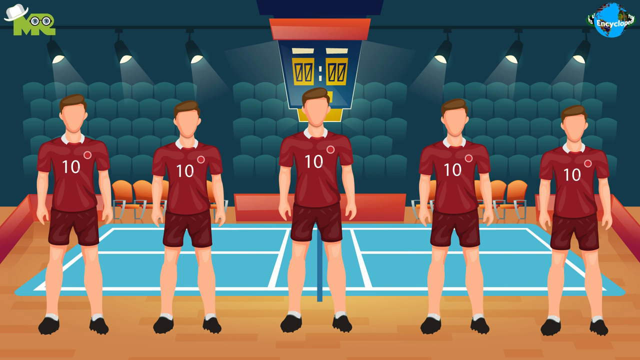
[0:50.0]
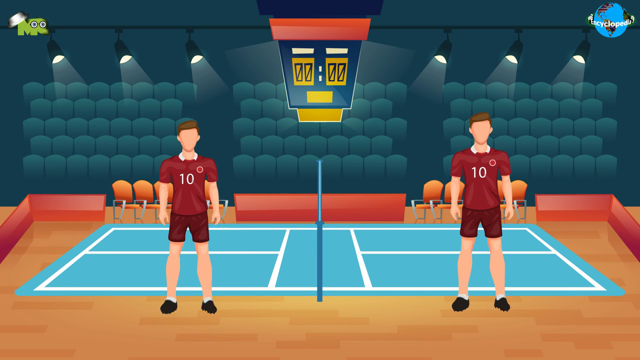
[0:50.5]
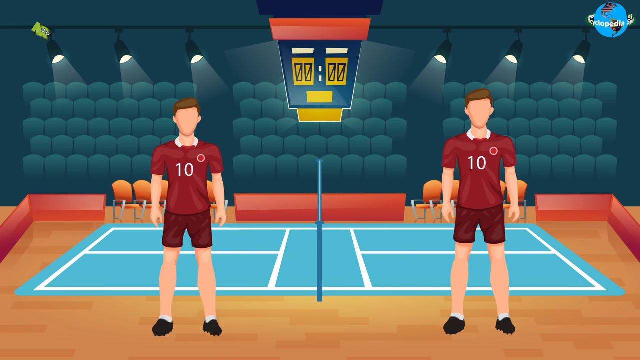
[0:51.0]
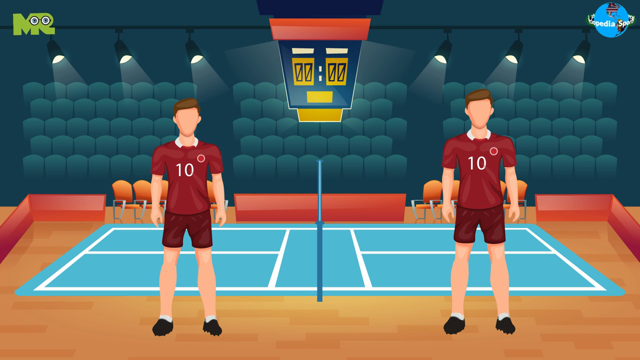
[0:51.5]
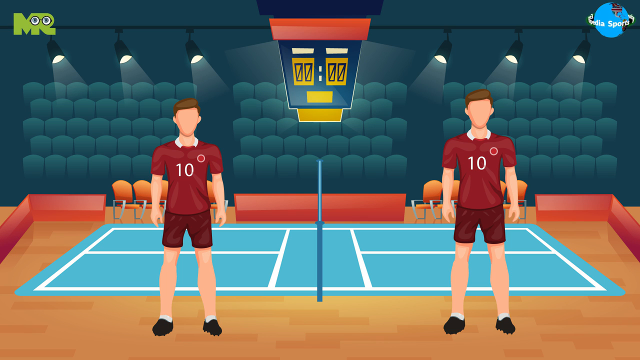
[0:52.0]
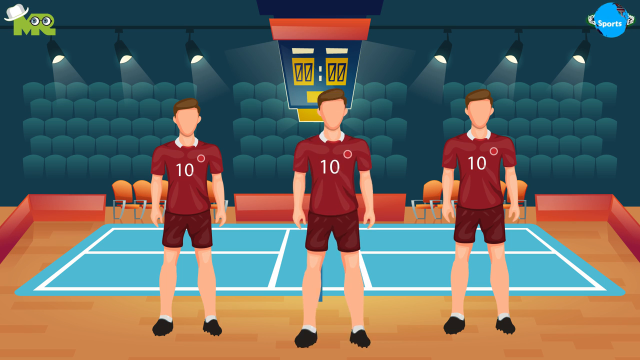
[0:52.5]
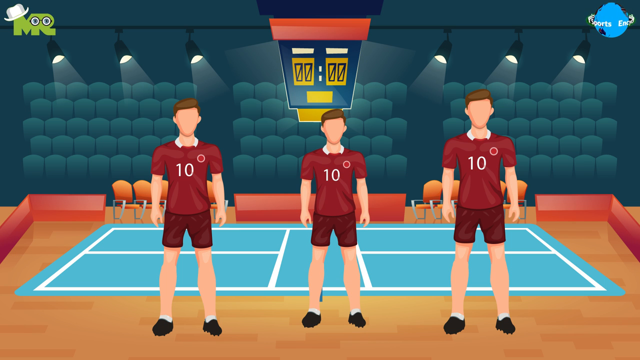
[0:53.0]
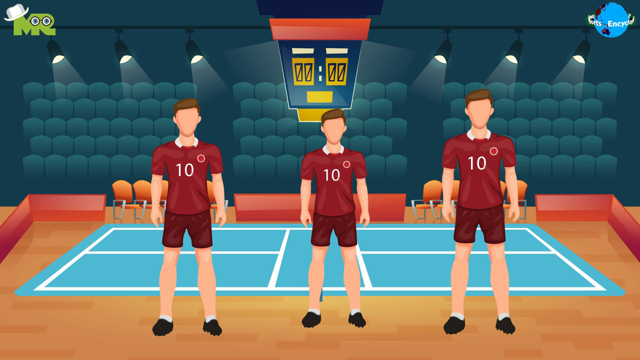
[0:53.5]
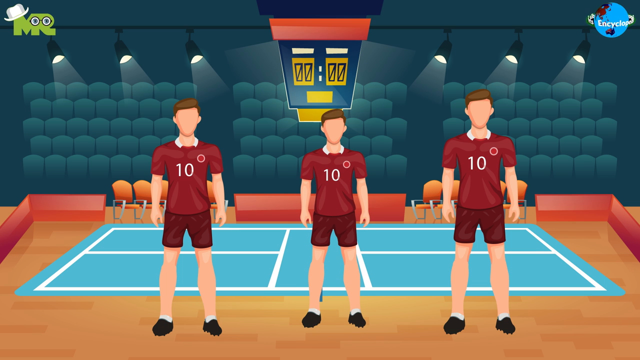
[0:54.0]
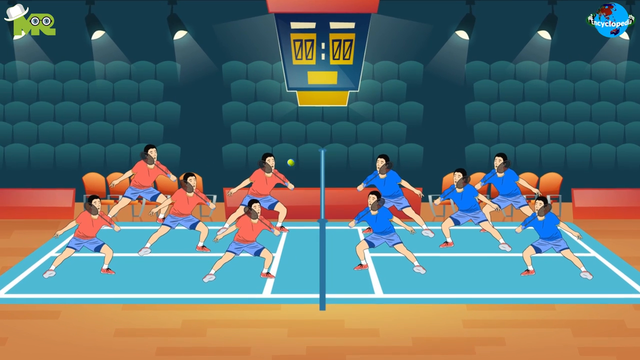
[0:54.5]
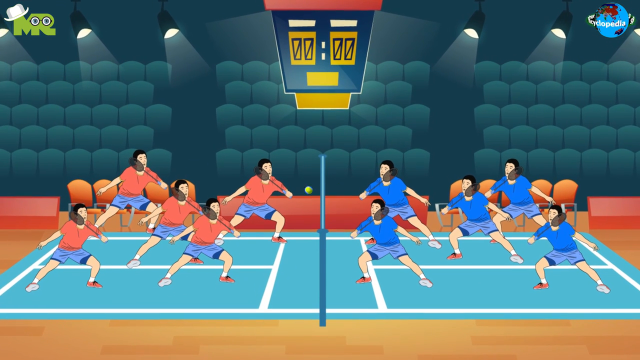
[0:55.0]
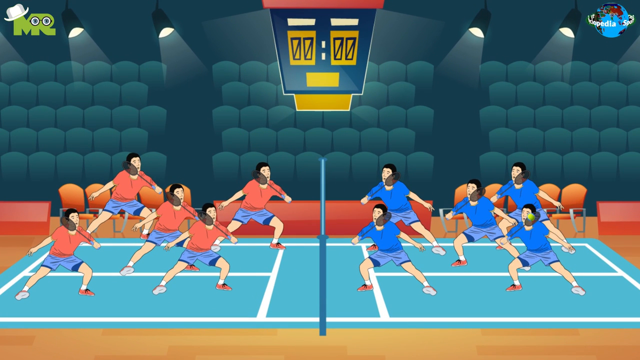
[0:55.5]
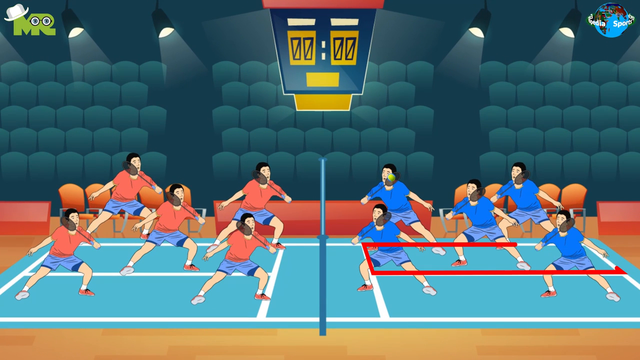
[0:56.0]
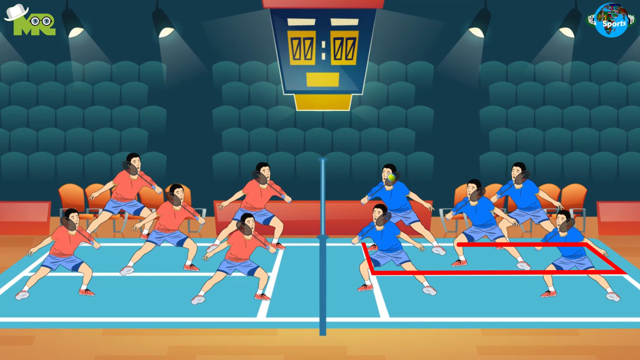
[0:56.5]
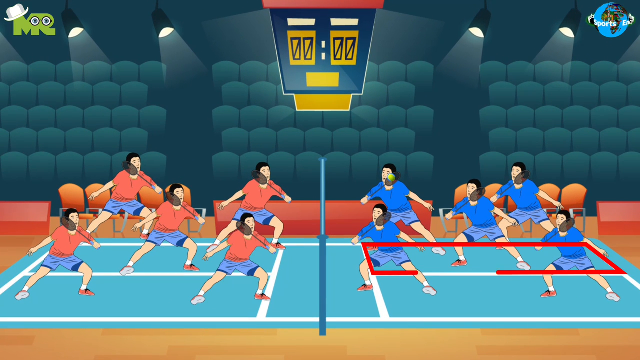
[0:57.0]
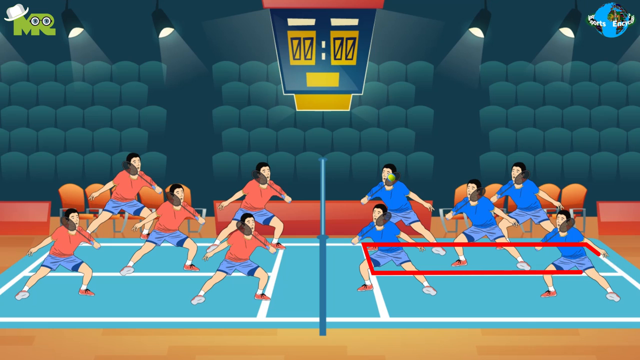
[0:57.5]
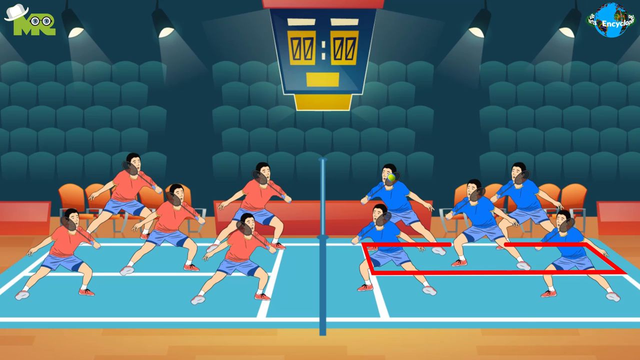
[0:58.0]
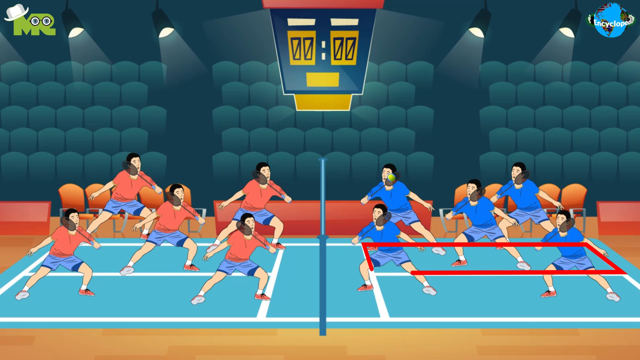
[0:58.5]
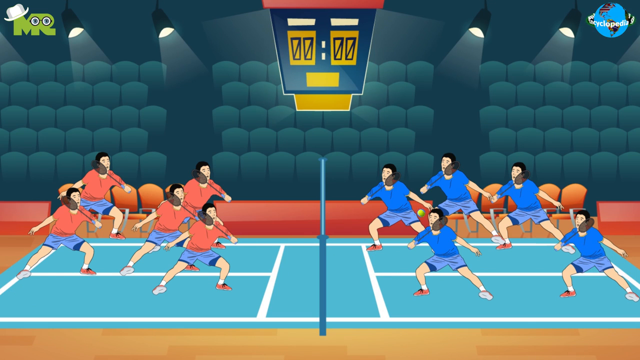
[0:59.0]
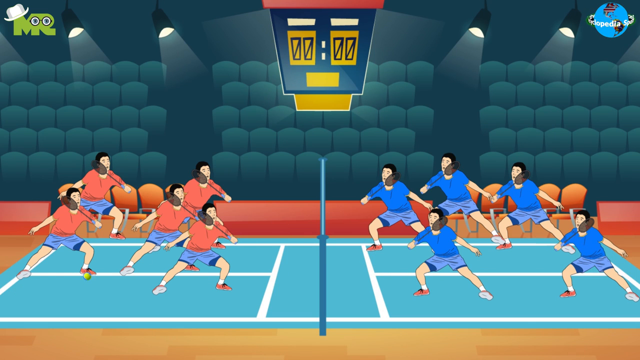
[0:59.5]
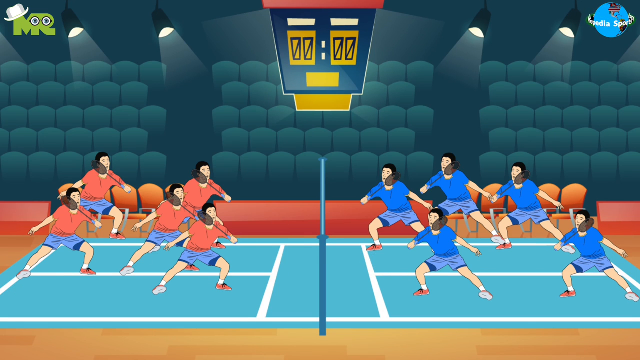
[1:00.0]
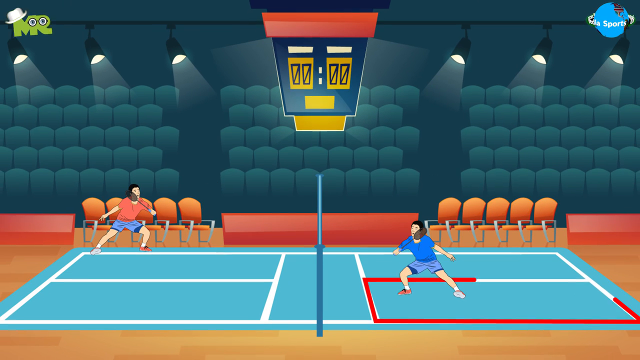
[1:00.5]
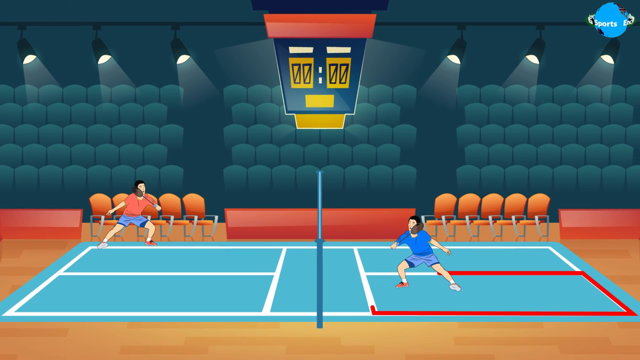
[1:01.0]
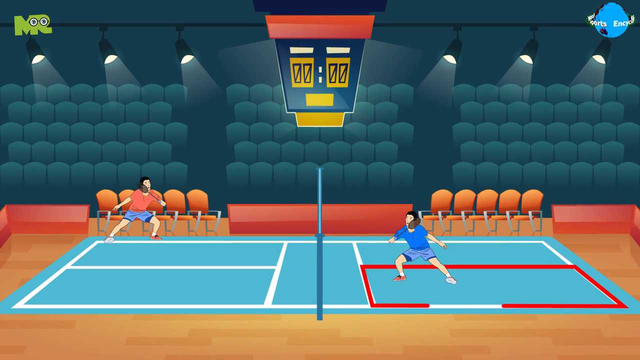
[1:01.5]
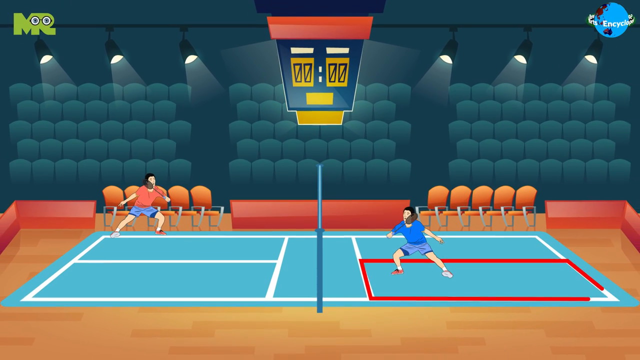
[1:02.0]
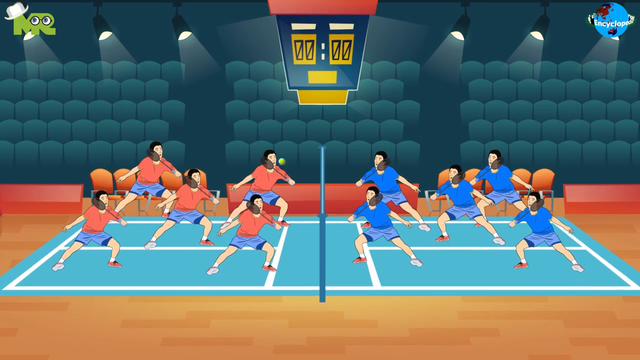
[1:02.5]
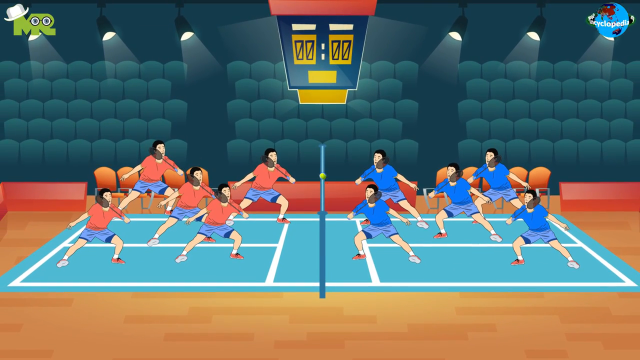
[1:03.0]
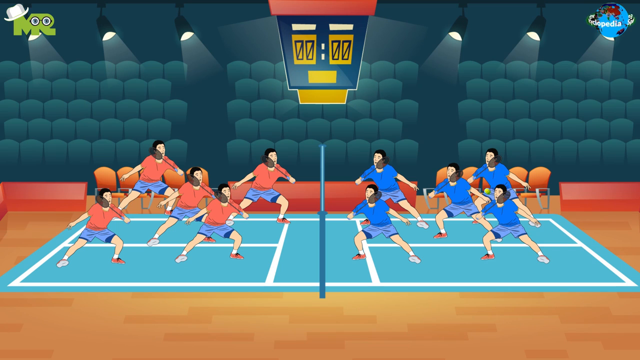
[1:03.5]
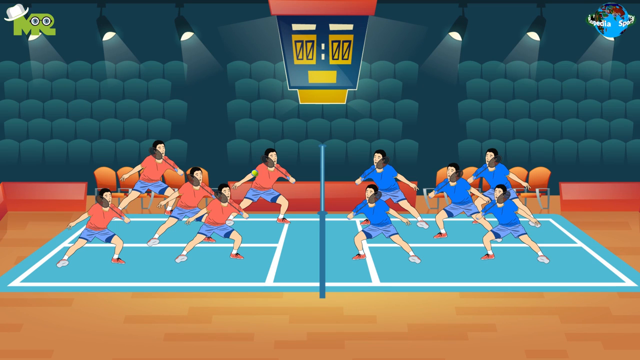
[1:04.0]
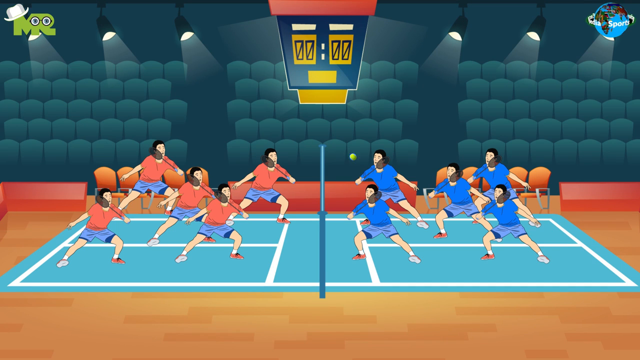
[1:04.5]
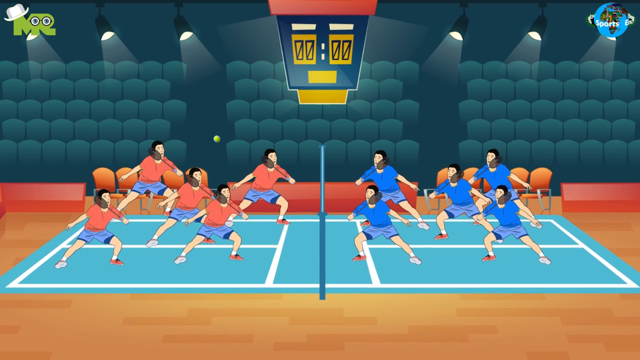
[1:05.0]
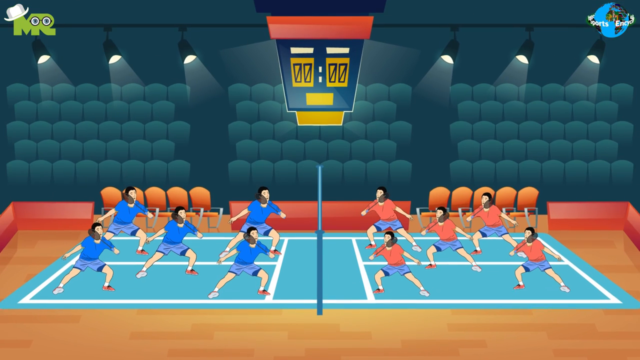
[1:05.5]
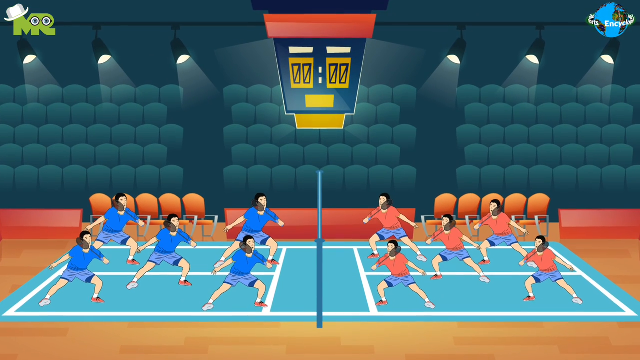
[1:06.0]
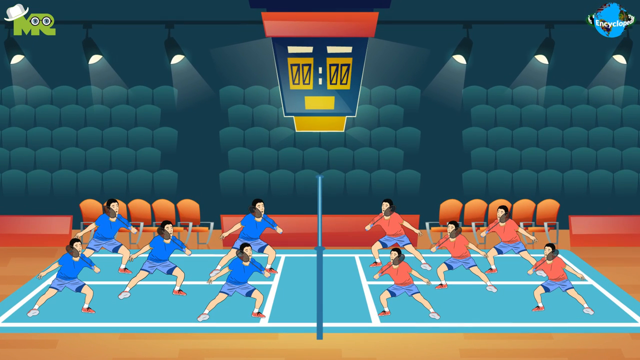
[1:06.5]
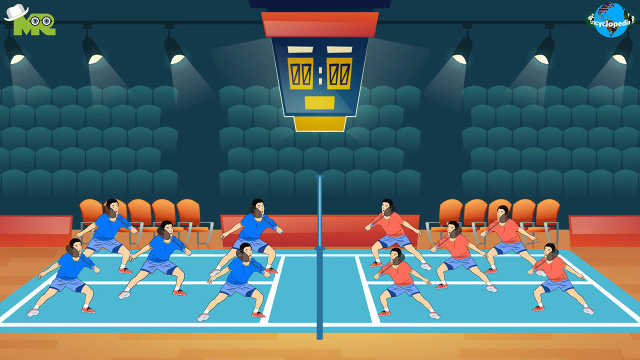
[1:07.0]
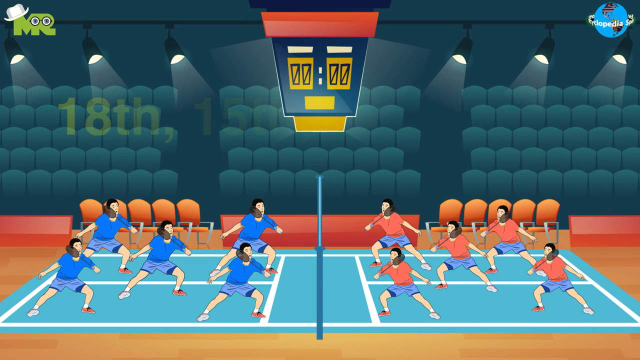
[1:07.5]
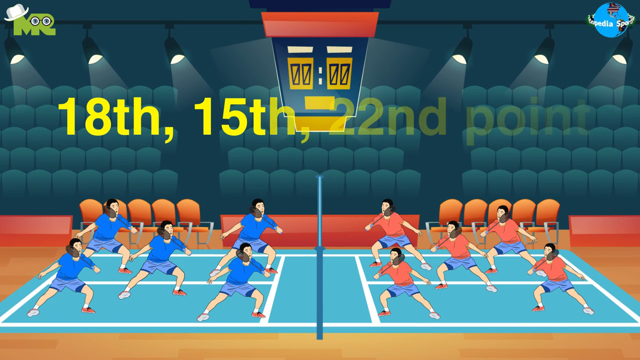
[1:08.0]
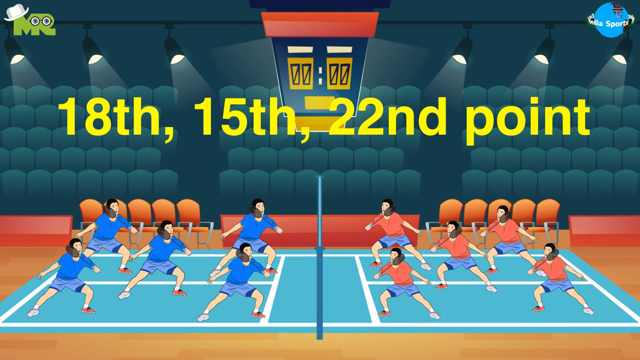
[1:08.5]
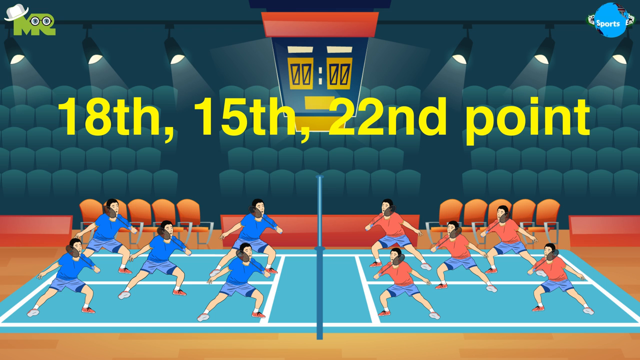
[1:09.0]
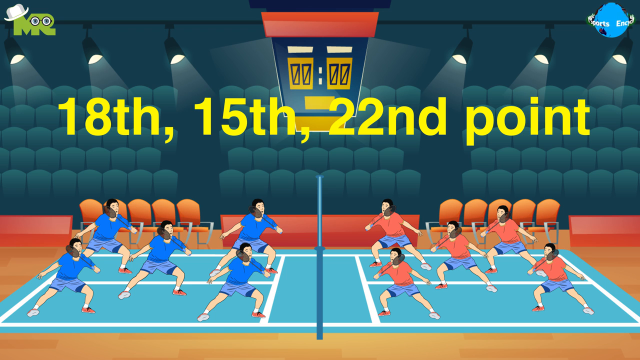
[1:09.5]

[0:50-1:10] Initially just two members of the red team are shown, then a third member appears. Next, certain parts of the tennis court are highlighted, including a highlight in red, apparently showing where people stand on the court. Afterwards, more yellow text appears at the top reading "18th, 15th, 22nd point".